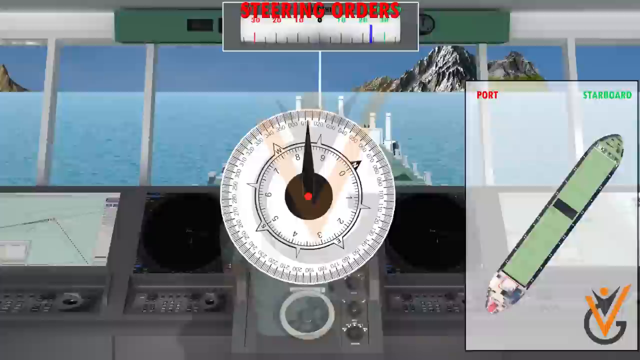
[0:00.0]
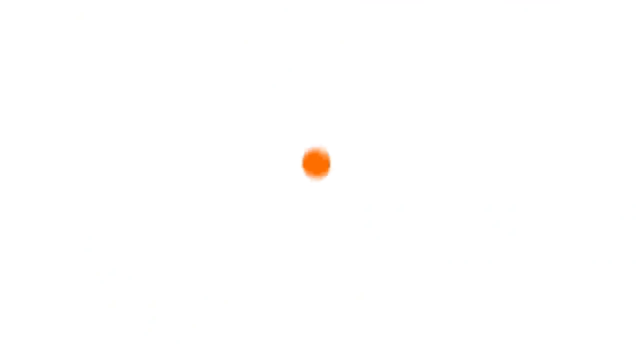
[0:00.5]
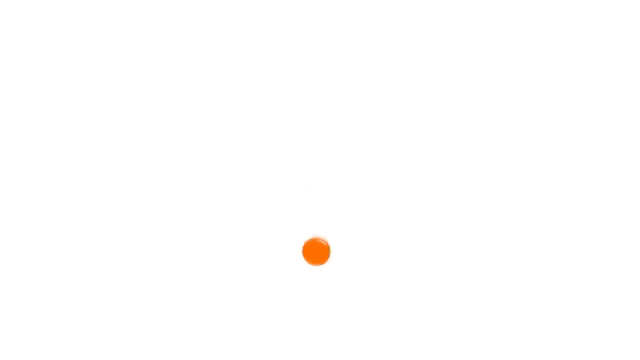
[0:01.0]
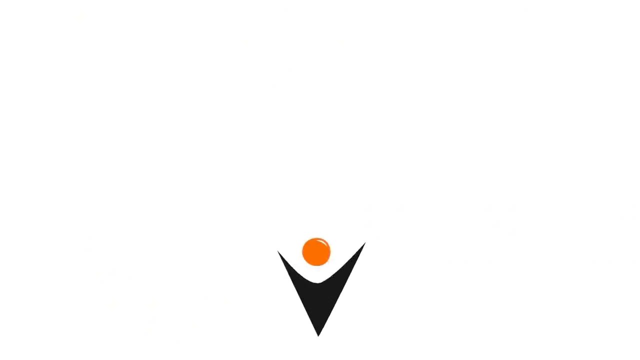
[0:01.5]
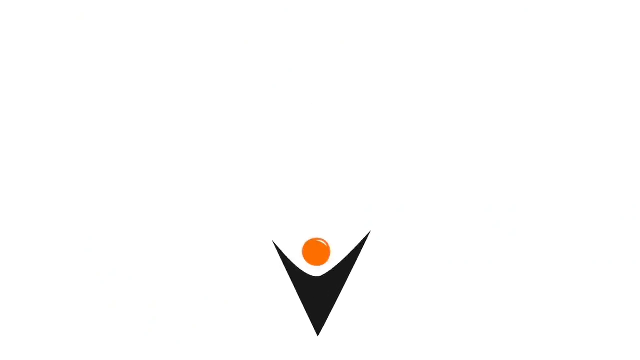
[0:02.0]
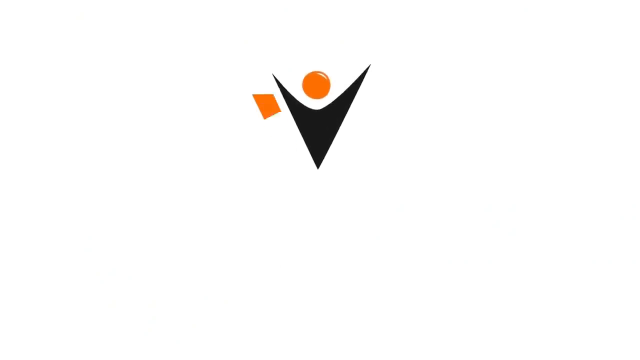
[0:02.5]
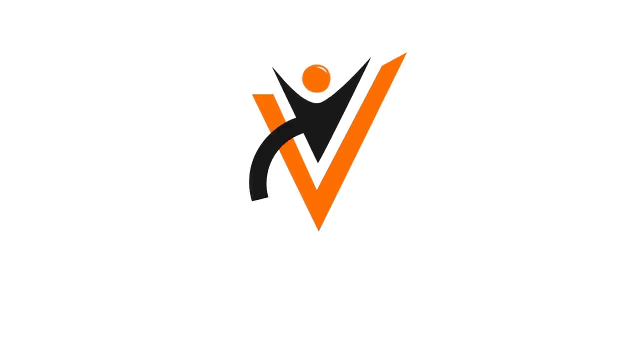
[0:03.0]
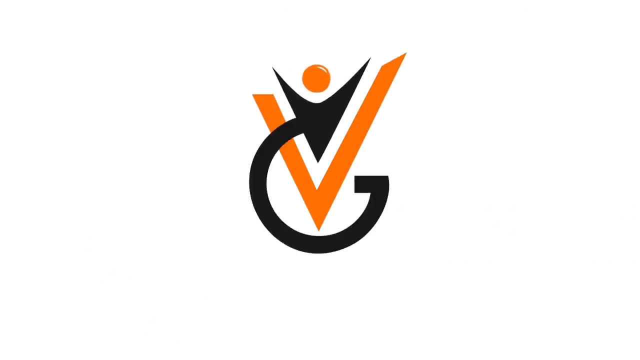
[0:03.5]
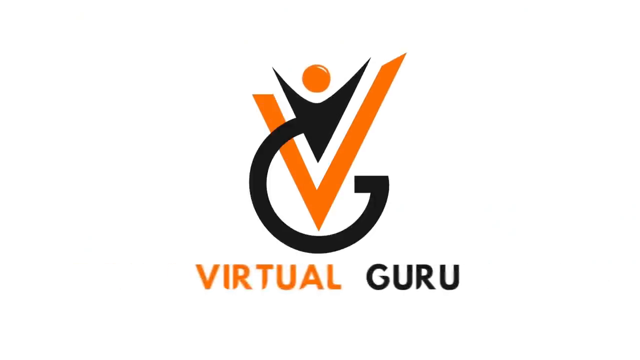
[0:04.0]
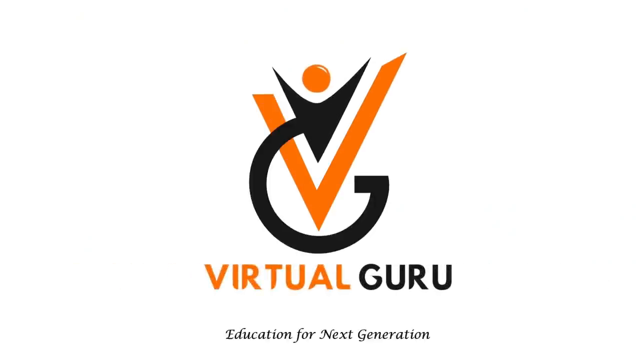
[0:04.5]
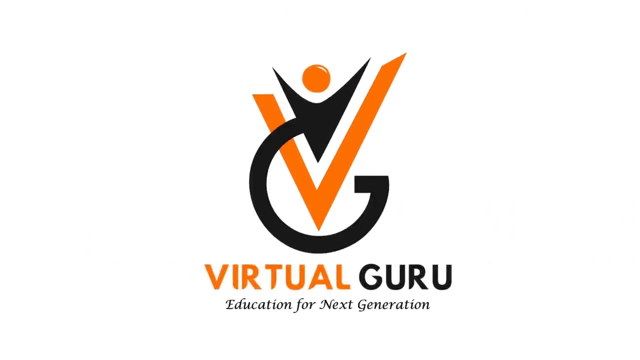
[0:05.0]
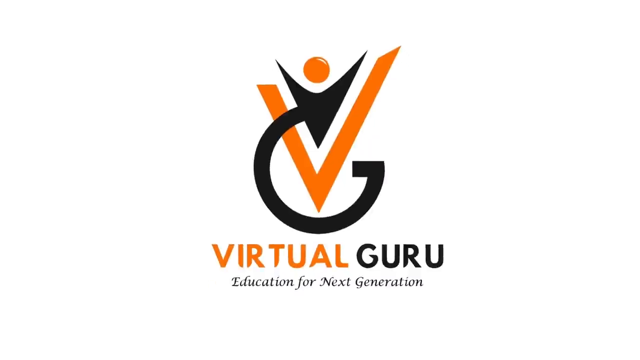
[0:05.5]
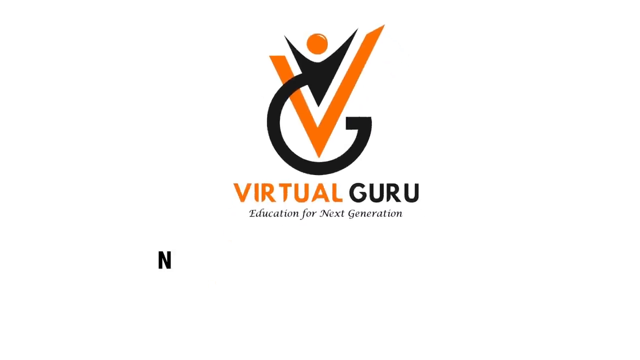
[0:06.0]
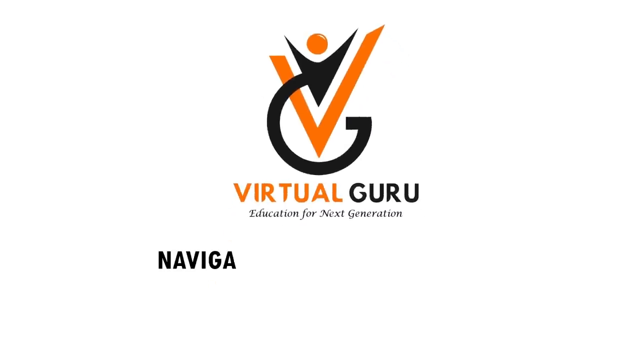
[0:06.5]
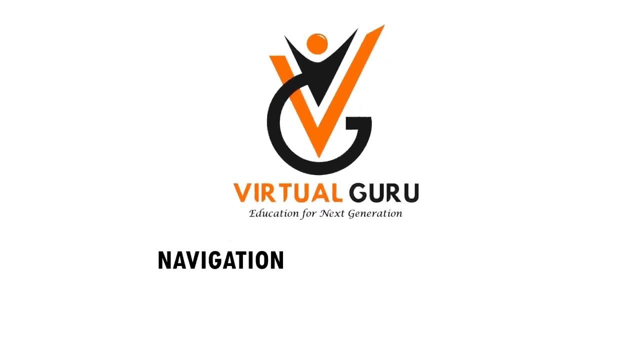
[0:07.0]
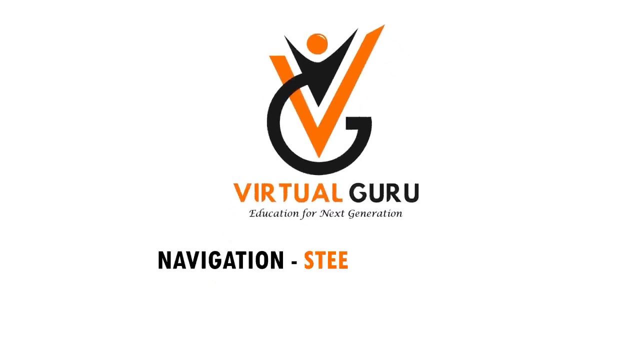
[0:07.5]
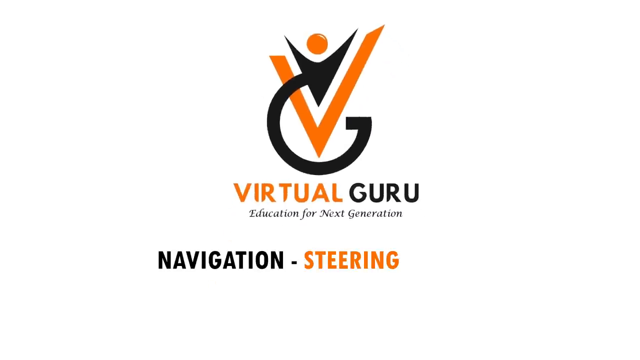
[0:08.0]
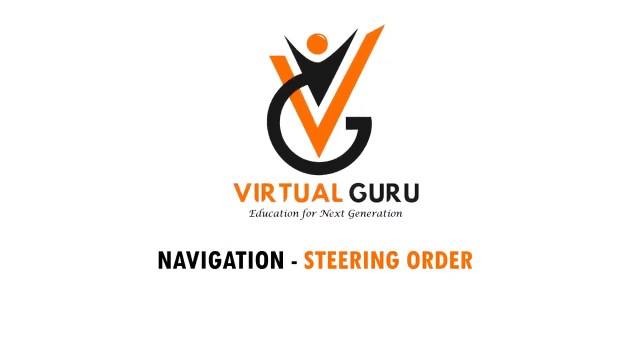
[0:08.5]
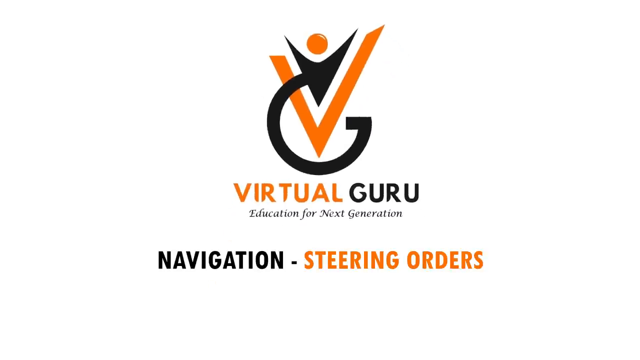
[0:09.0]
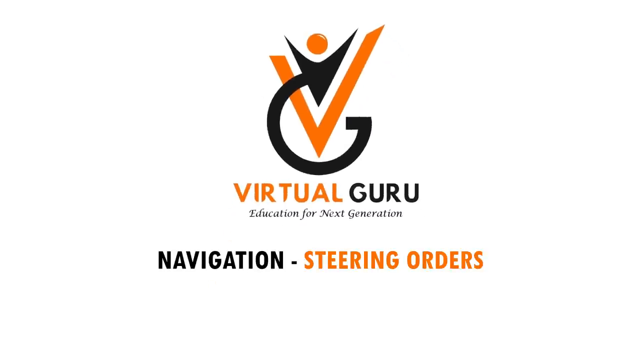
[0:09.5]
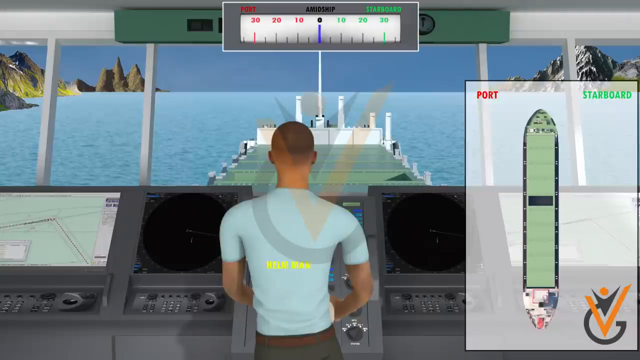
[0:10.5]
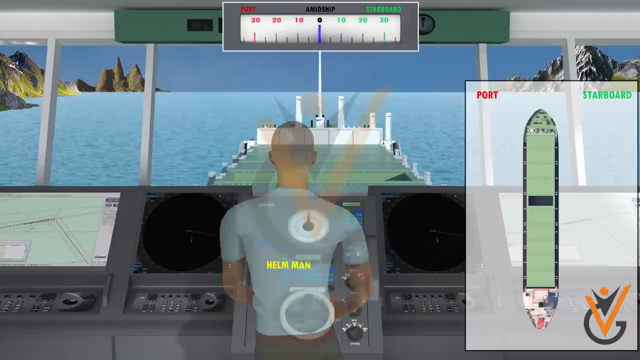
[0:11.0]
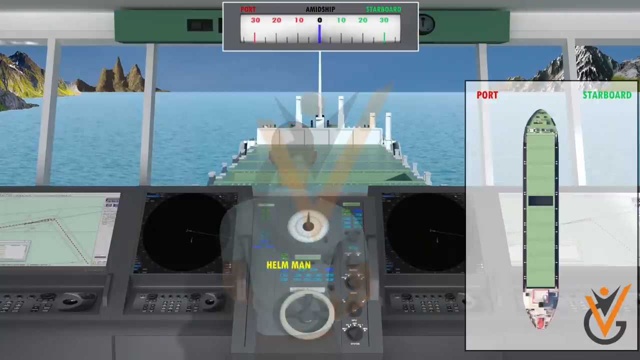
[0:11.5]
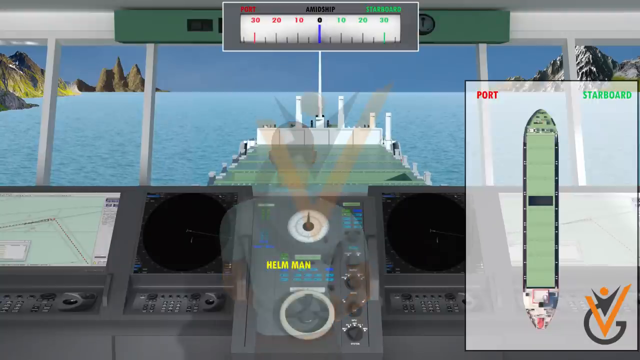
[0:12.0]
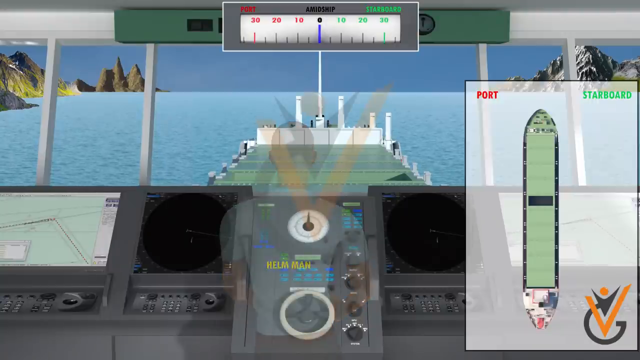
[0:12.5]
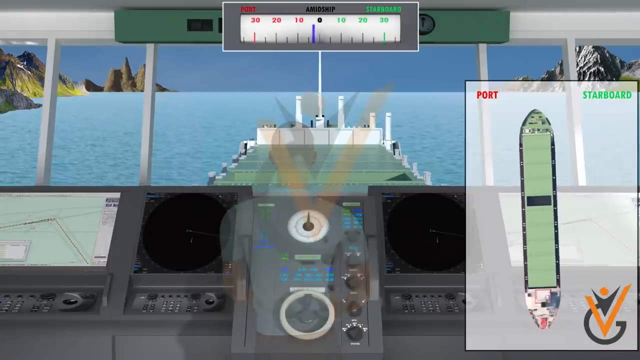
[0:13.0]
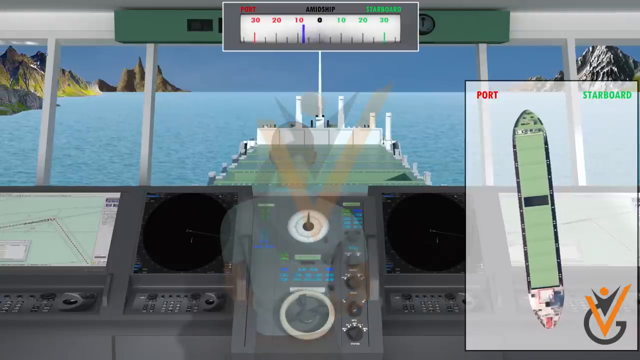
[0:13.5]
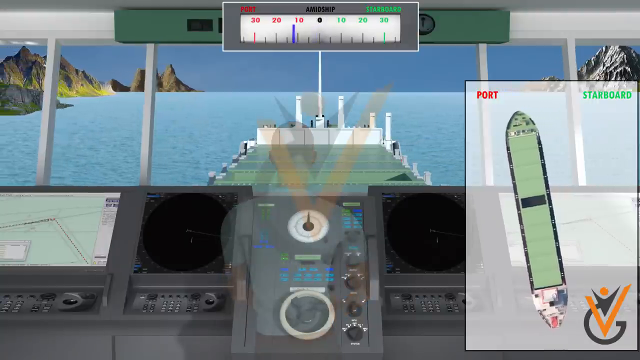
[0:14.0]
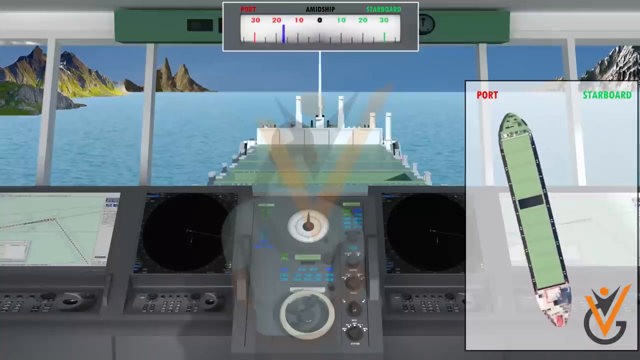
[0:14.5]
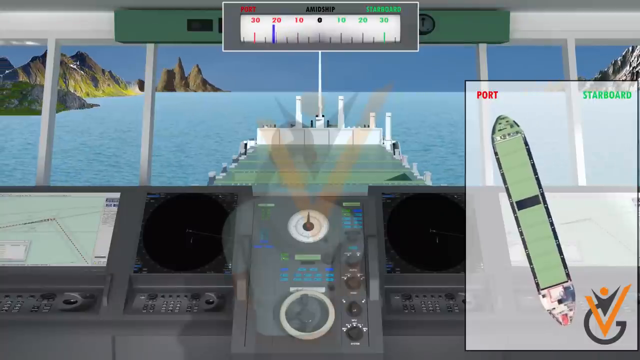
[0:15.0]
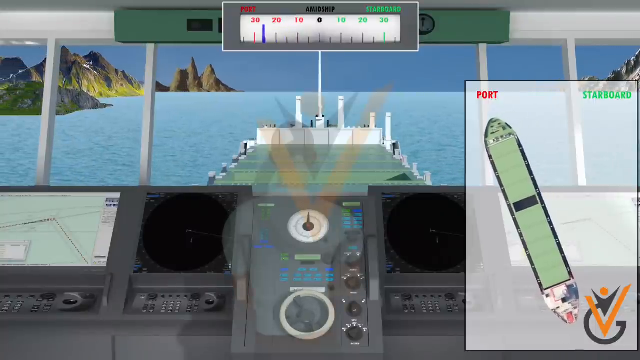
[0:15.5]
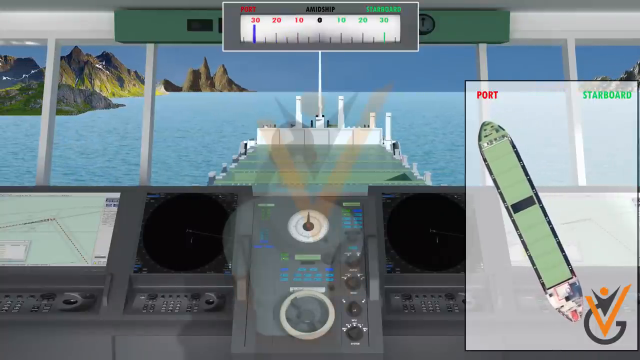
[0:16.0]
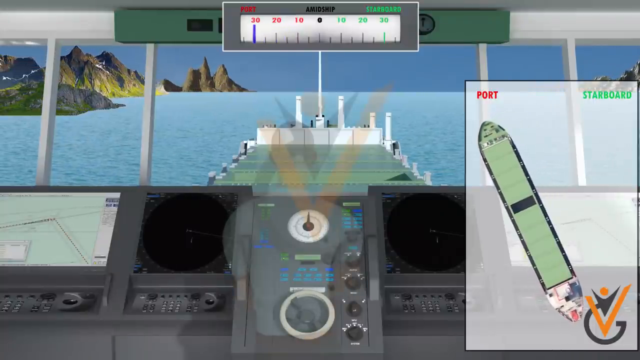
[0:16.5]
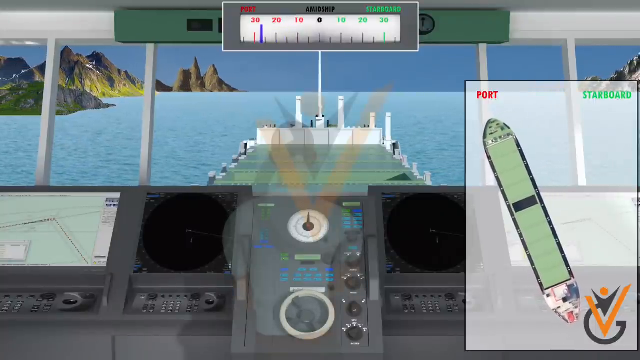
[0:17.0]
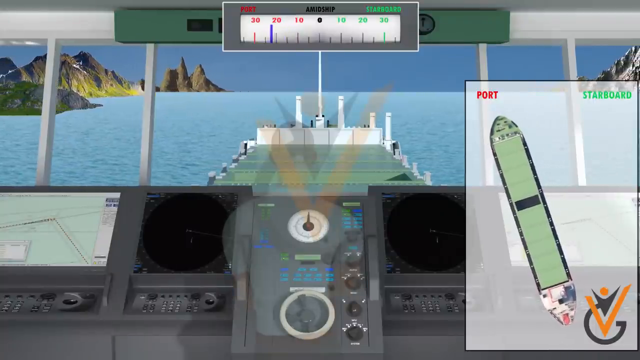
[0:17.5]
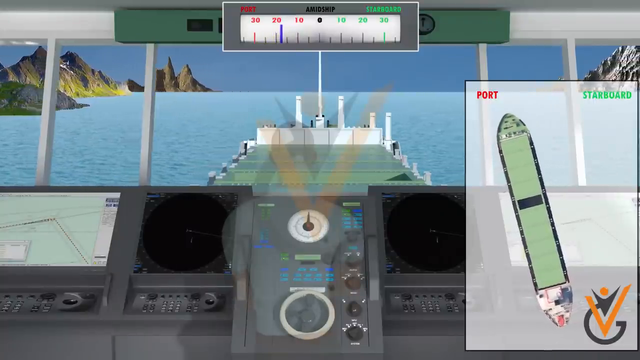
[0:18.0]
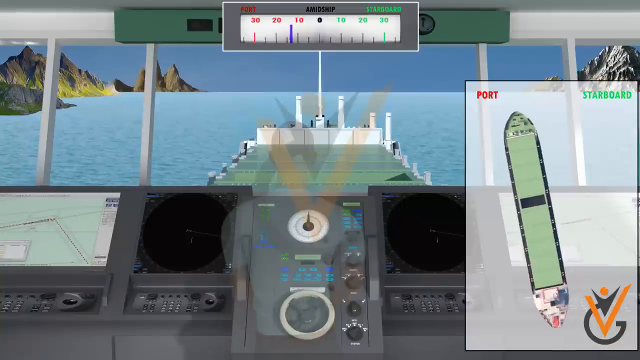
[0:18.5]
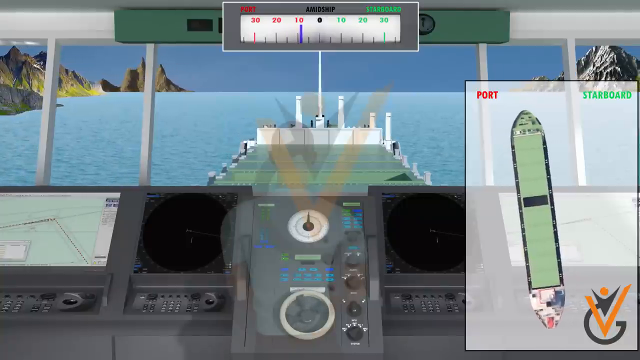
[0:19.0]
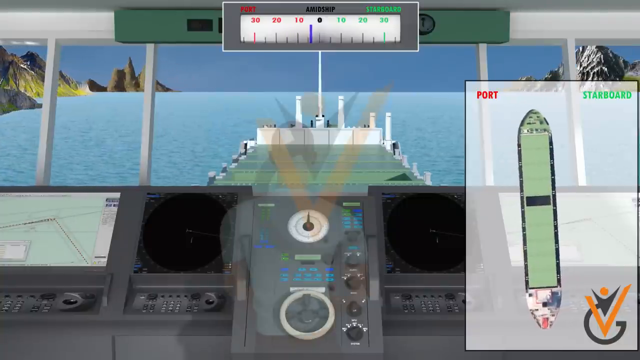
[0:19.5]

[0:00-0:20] A computerized, cartoon-type person stands at a steering column to steer a computer-generated boat. On the right side of the video, the boat is steered in two different directions: when it points to the left, the word "port" appears, and when it points to the right, "starboard" appears. At the top of the video the text reads "steering orders". After the person steers the boat left and right, a gauge pops up on the screen. In the background, the boat moves back and forth on the ocean, with mountains on both the left and right sides. A board showing a map is on the left side of the instruction column where the man is learning to steer the boat.